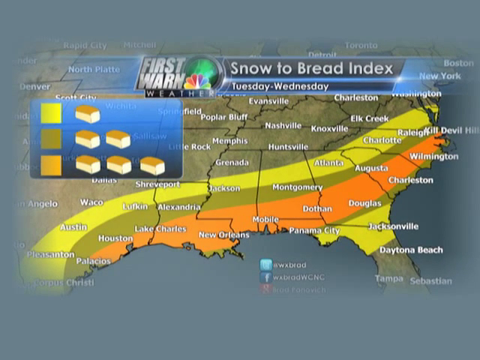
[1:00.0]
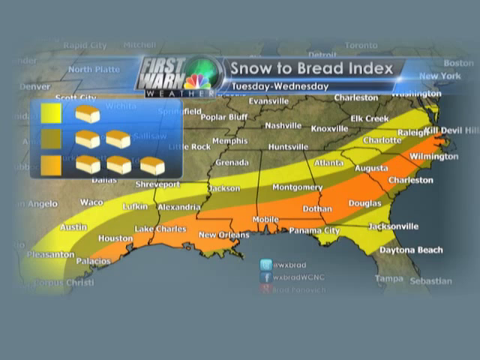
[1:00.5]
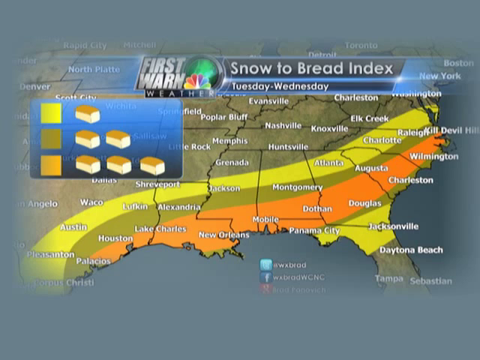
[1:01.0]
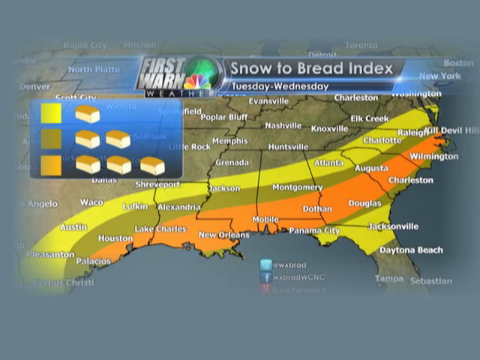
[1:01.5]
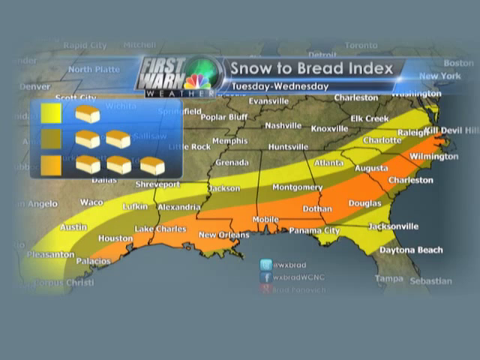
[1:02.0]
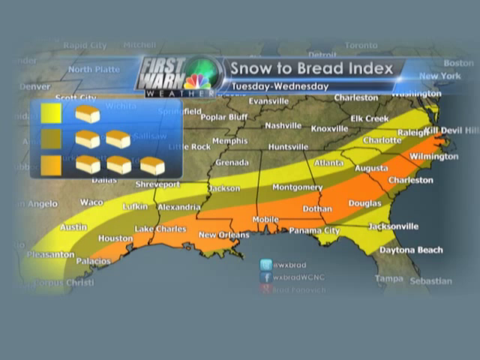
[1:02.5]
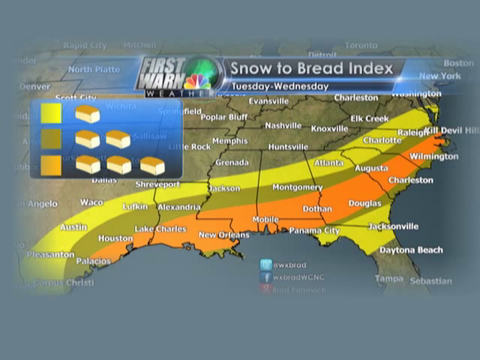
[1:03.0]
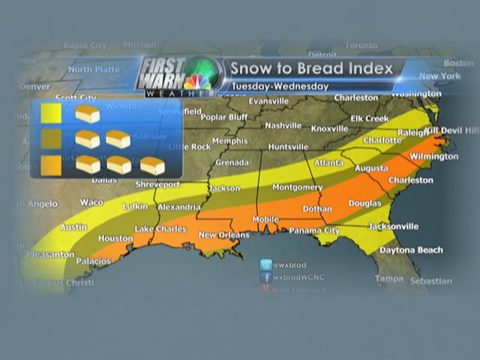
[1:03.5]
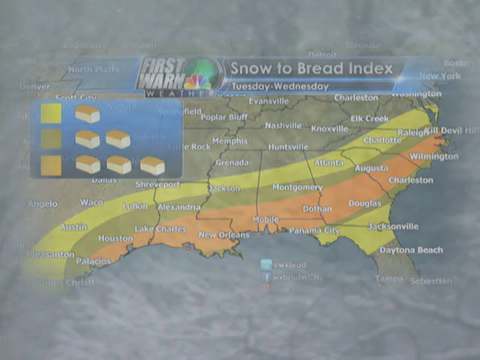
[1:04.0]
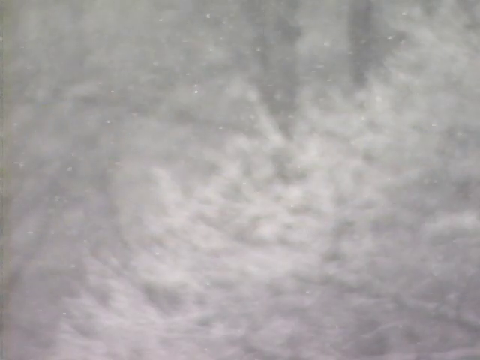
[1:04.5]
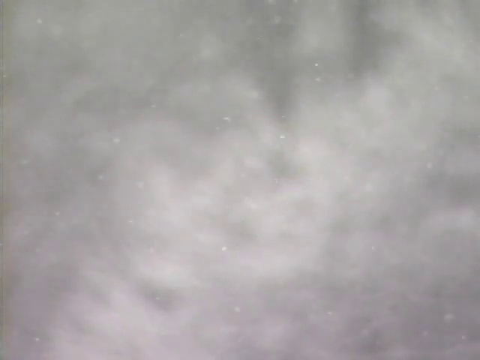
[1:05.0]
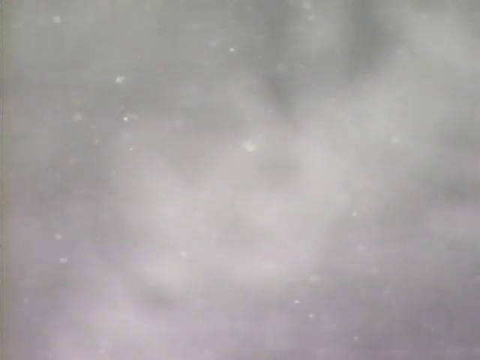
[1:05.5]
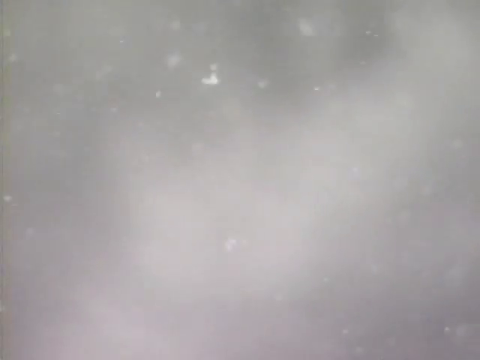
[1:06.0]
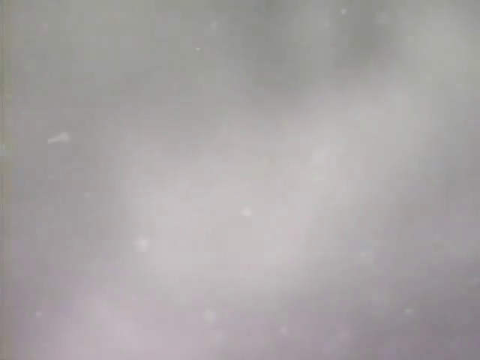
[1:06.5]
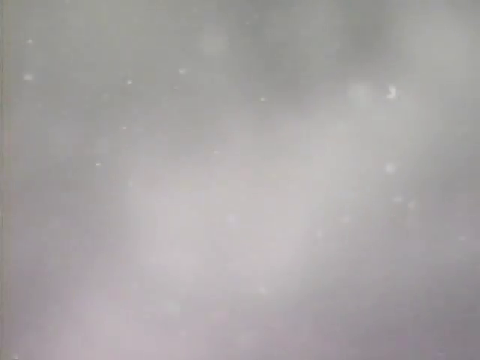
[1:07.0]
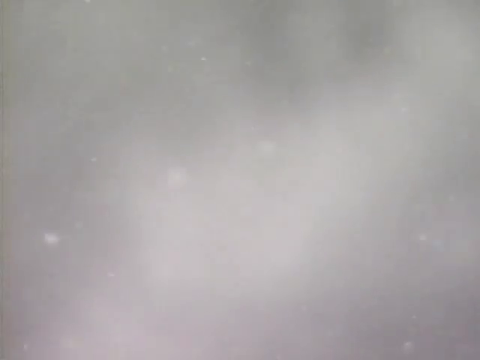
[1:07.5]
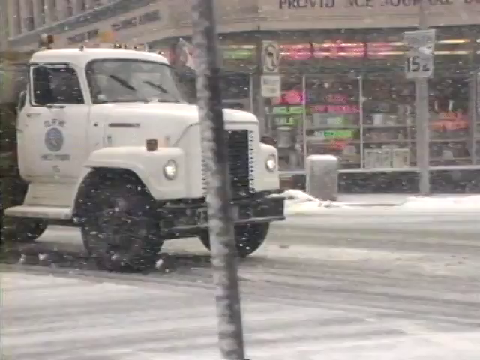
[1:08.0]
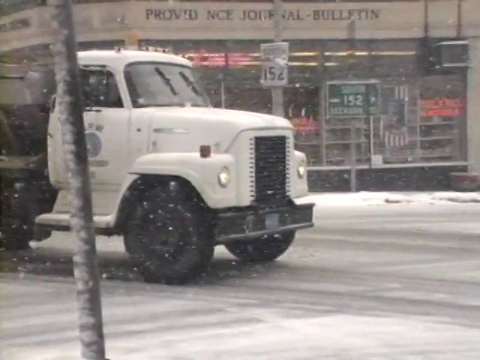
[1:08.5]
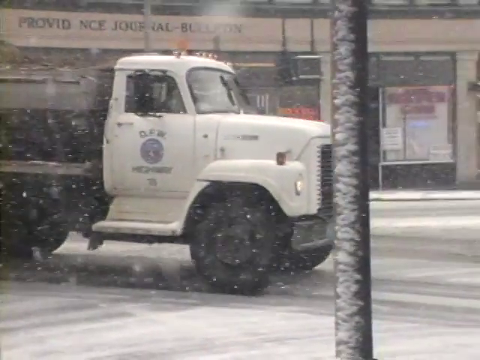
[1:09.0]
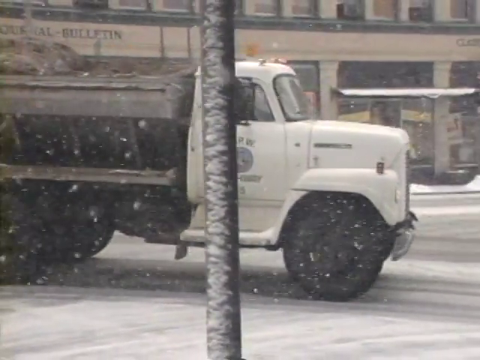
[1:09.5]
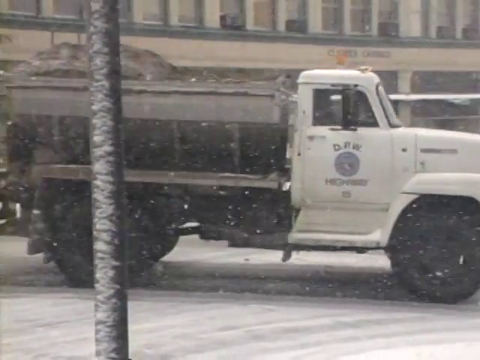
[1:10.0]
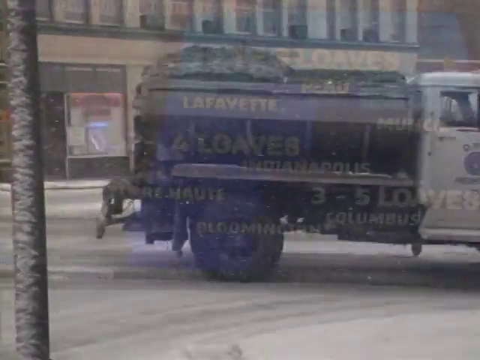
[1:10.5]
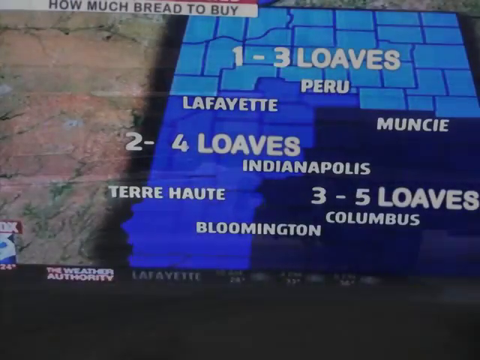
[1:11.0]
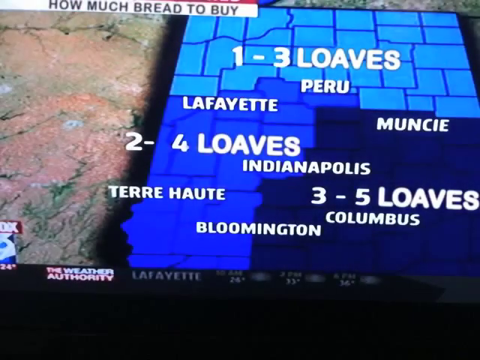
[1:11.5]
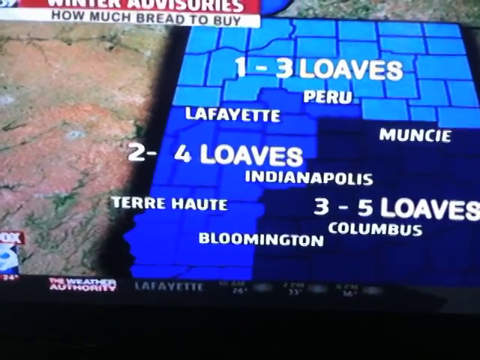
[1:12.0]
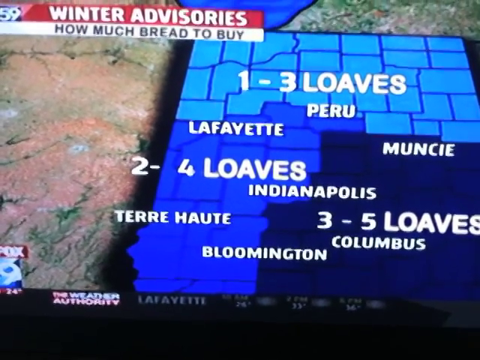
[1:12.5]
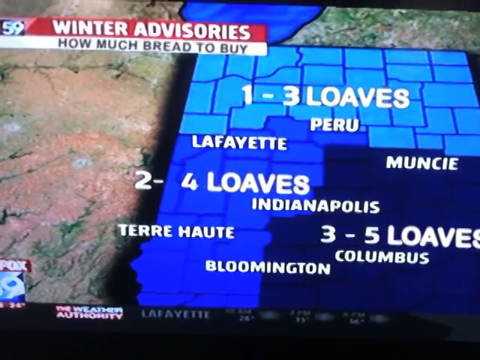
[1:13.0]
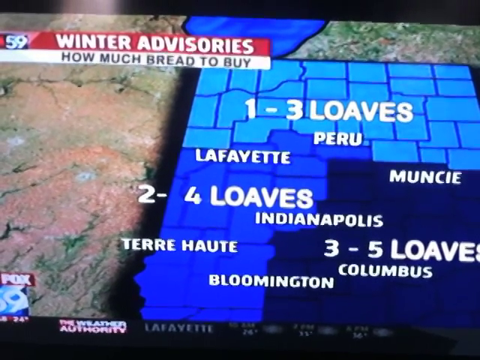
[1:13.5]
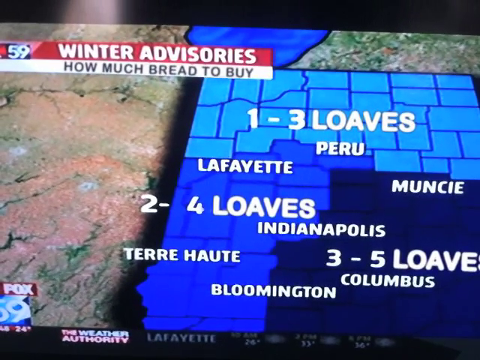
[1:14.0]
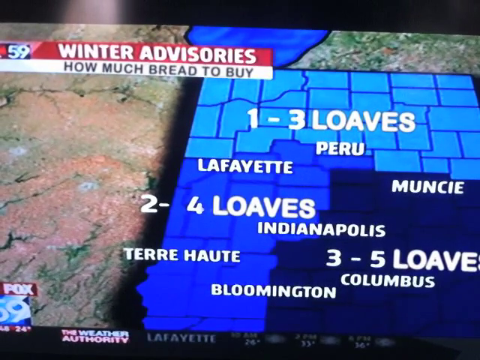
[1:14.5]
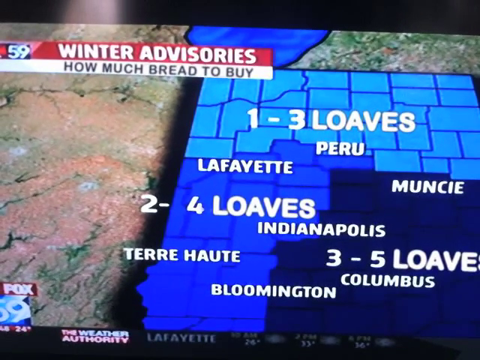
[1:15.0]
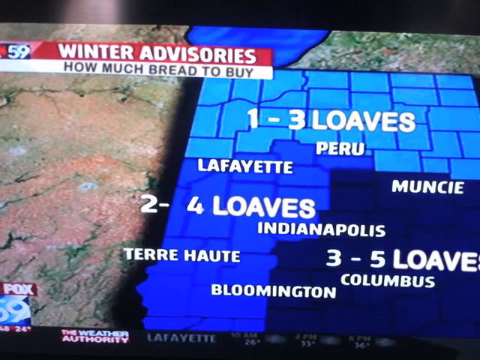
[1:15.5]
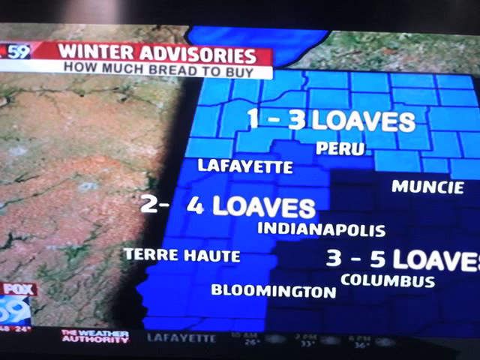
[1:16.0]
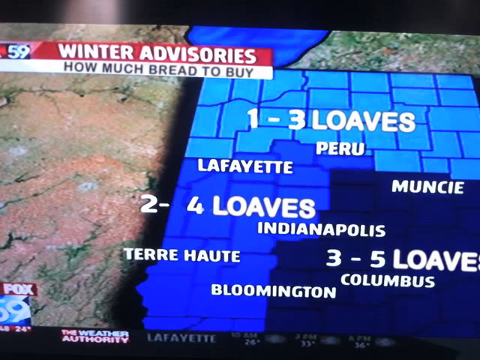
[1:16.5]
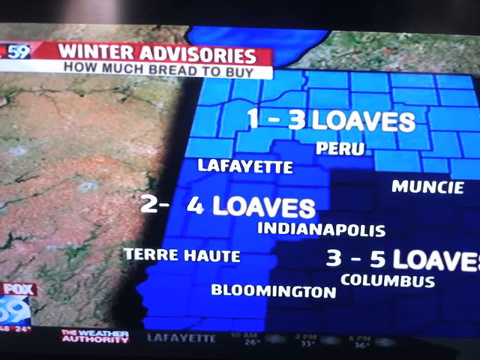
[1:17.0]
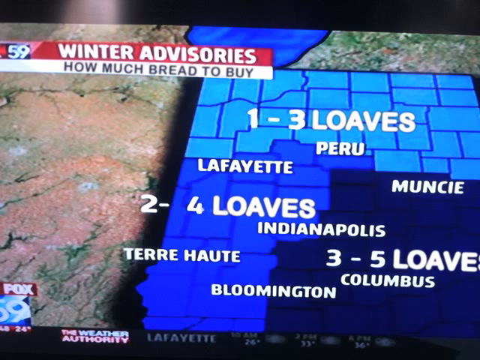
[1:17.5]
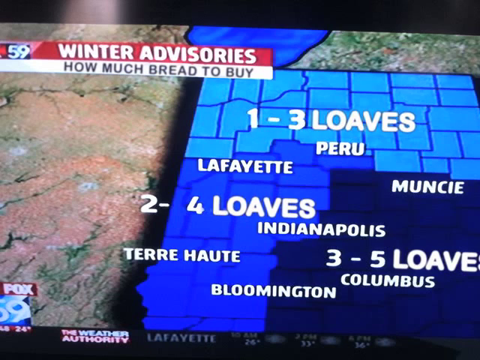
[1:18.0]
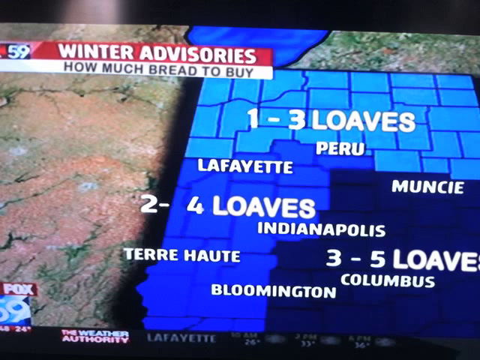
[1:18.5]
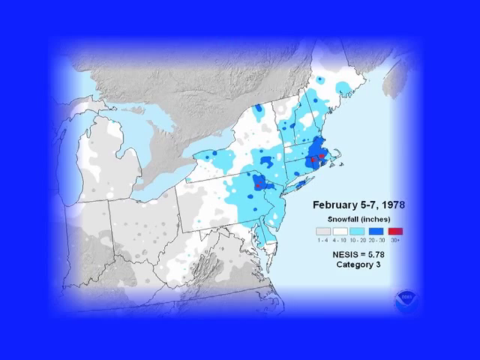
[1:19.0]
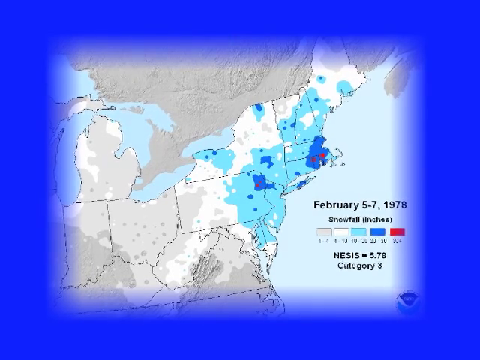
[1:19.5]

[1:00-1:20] A map of a country shows the names of some provinces. The video switches to footage of rainfall and snow, then to a white truck with black wheels driving around a town with some grass behind it. The truck seems to be carrying what looks like bread. A news station shows how much bread to buy for winter, with numbers of loaves a person should buy: three loaves, two to four loaves, three loaves. Another map shows how much snowfall there is going to be and how it will affect people. A poster shows how much bread a place should get, and a map shows how much bread to buy in different countries.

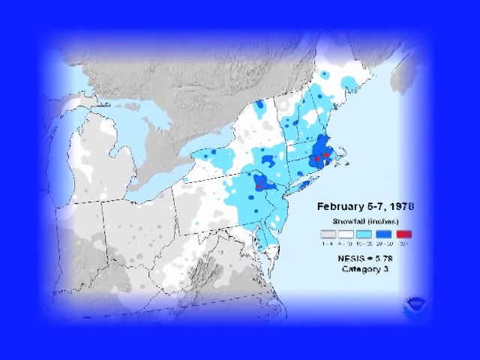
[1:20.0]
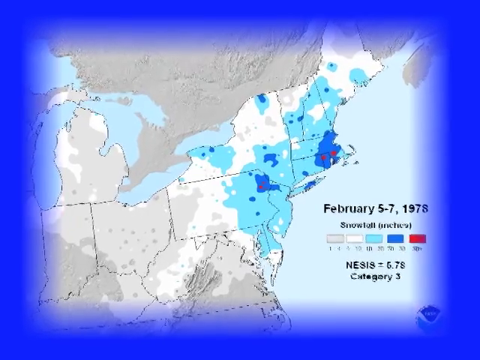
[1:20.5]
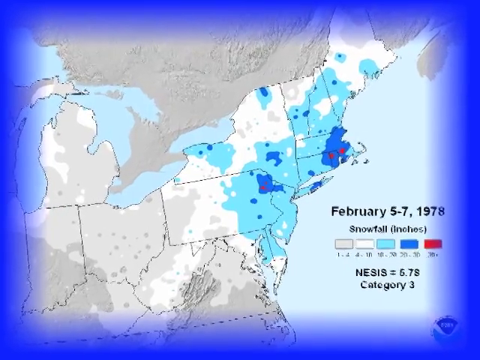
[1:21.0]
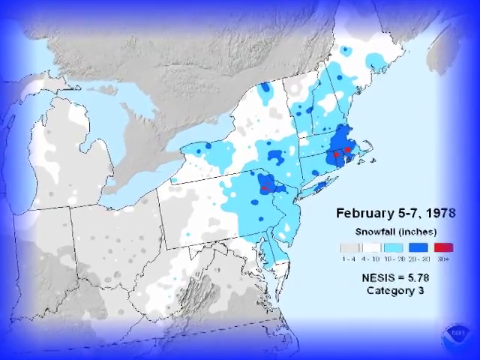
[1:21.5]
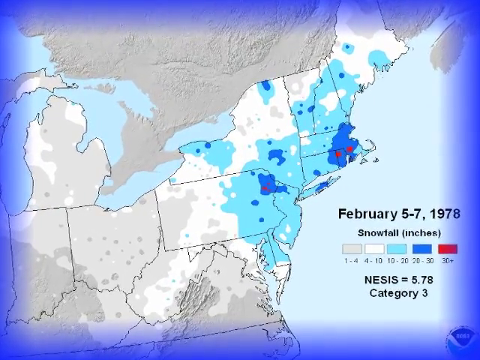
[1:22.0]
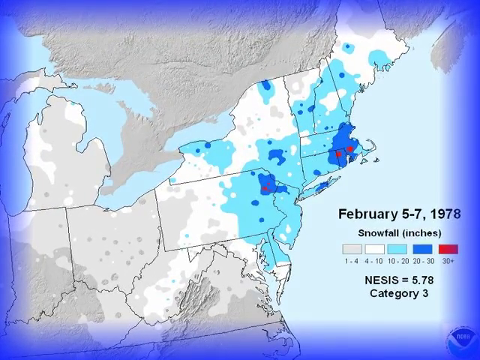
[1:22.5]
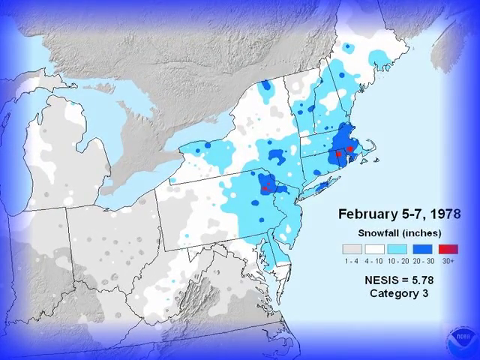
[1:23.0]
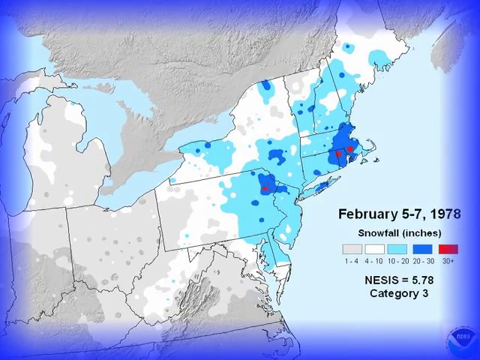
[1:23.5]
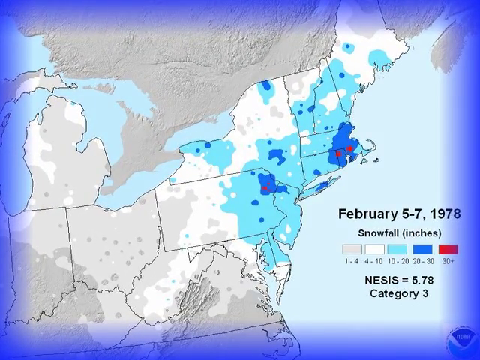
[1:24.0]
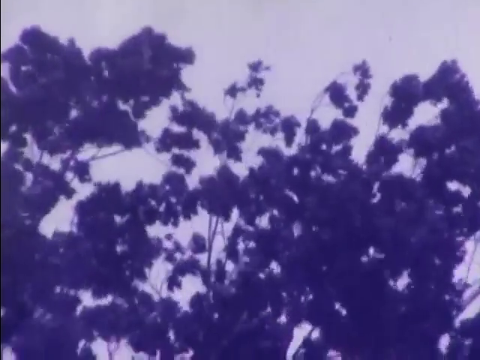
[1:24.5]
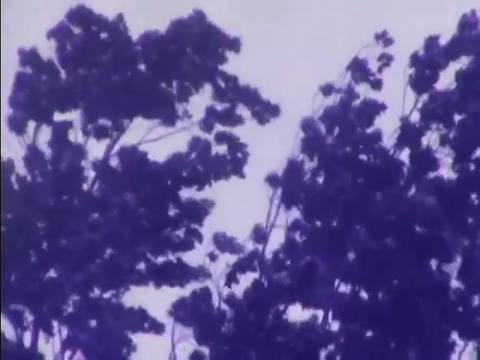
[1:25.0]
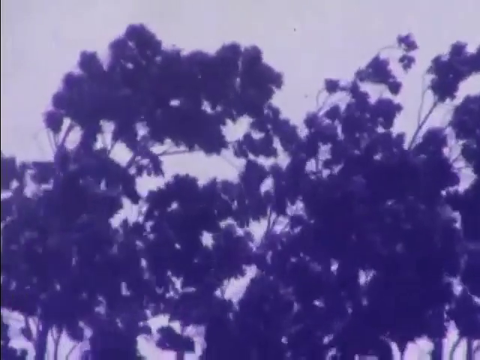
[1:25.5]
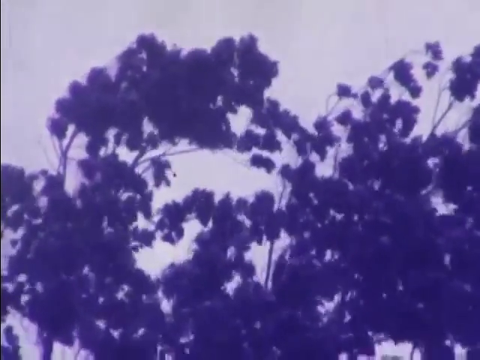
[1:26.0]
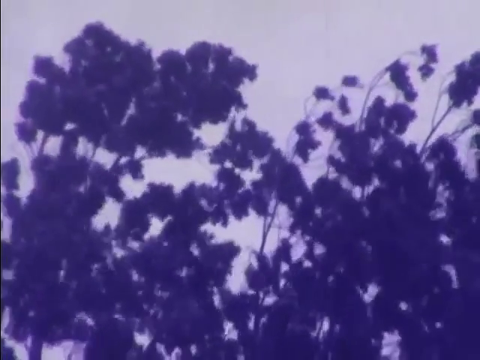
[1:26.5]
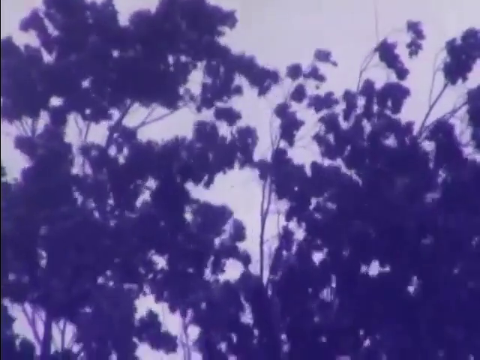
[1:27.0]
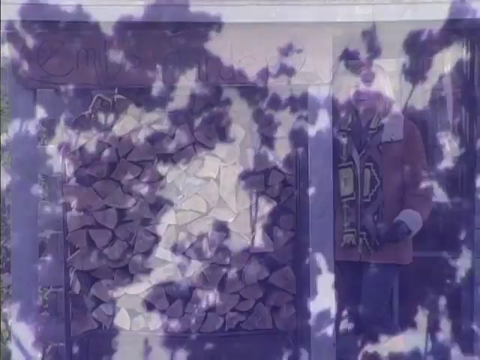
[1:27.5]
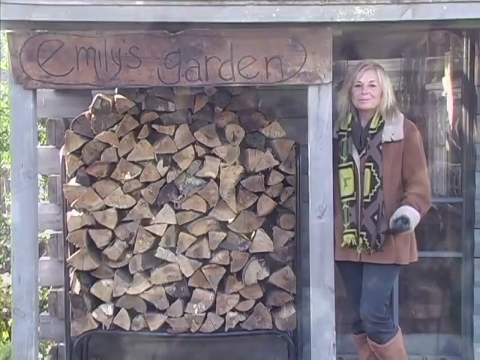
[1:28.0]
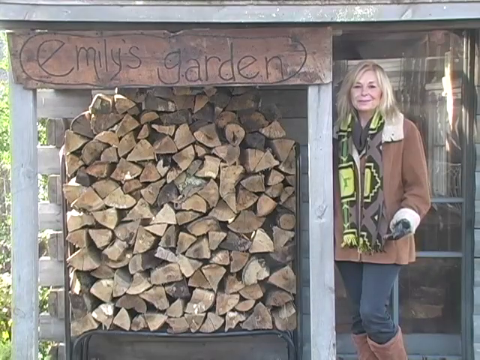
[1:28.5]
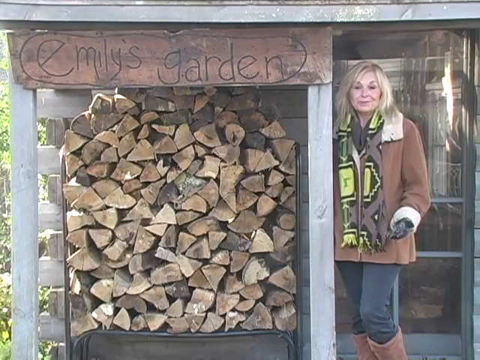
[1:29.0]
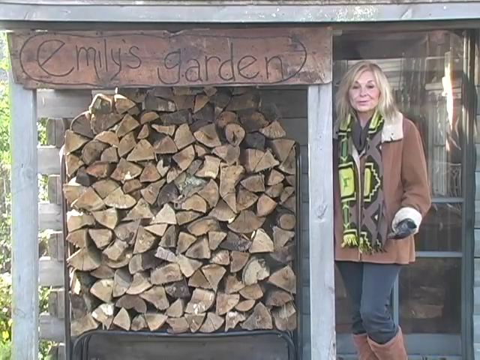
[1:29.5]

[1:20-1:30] A map with some blue and white around it and a red dot is shown. The video switches to a tree, then to a woman who seems to be talking about logs and wood. She has blonde hair and wears a white jacket and brown boots. She is next to logs, next to a poster behind glass that says "Emily's Garden", and next to a gray structure with some wood inside it.